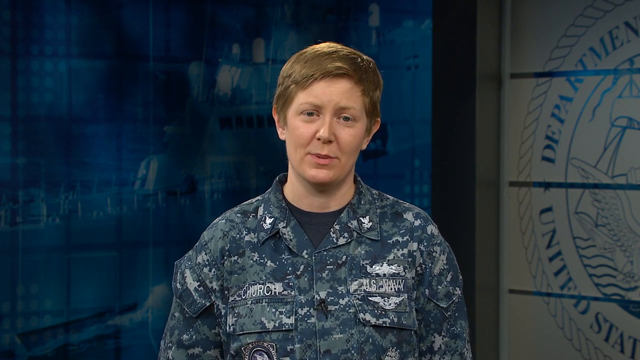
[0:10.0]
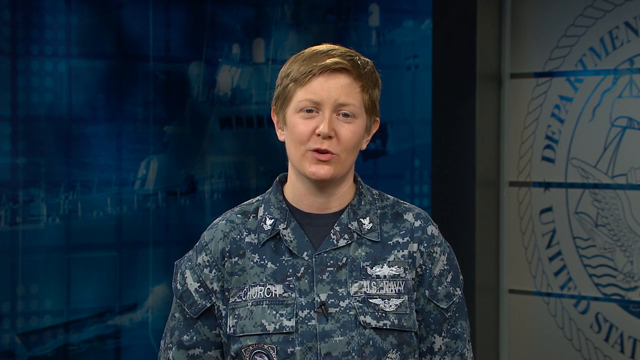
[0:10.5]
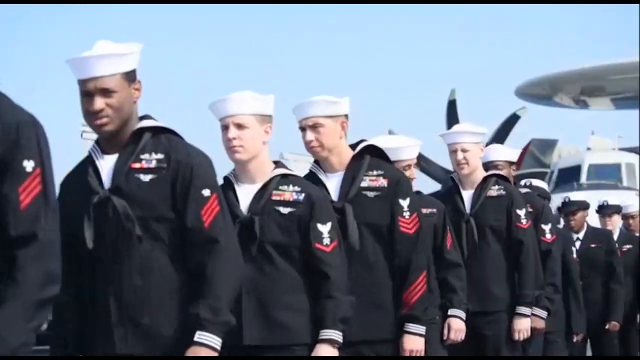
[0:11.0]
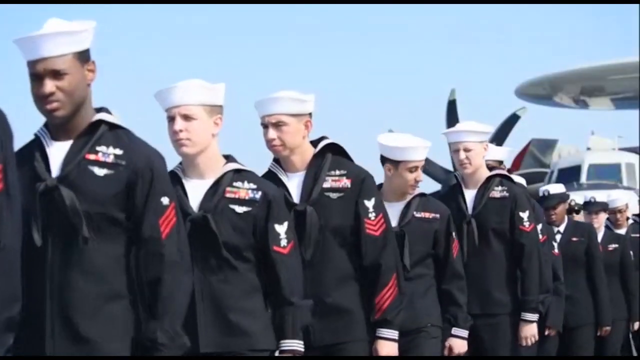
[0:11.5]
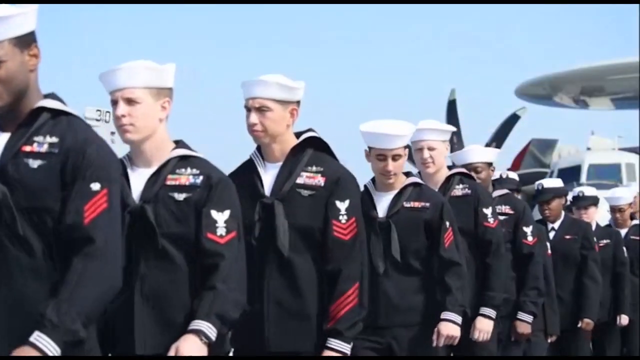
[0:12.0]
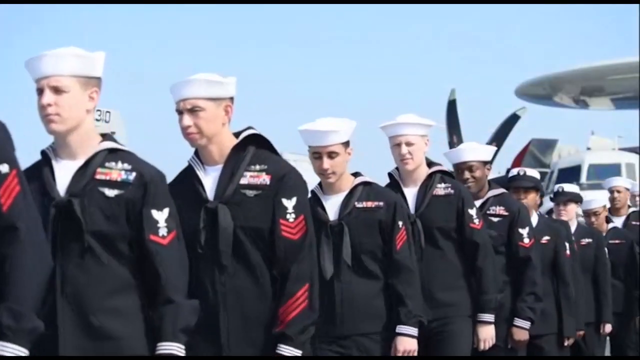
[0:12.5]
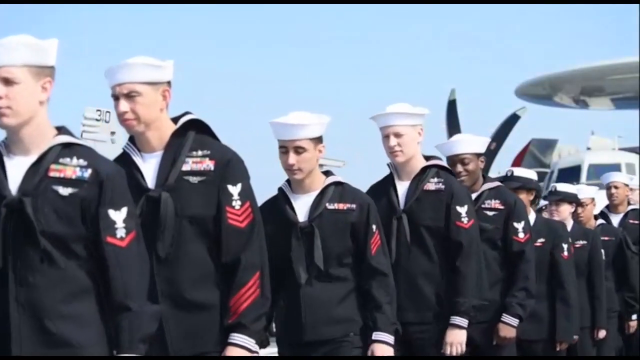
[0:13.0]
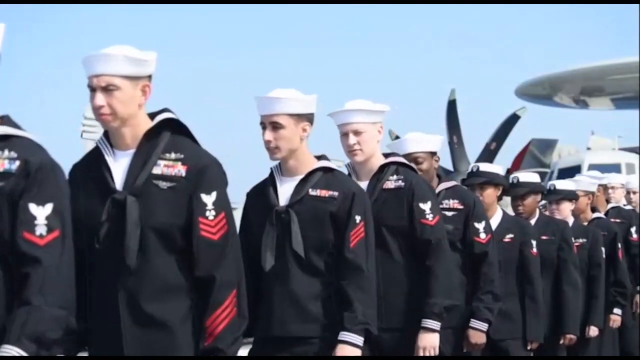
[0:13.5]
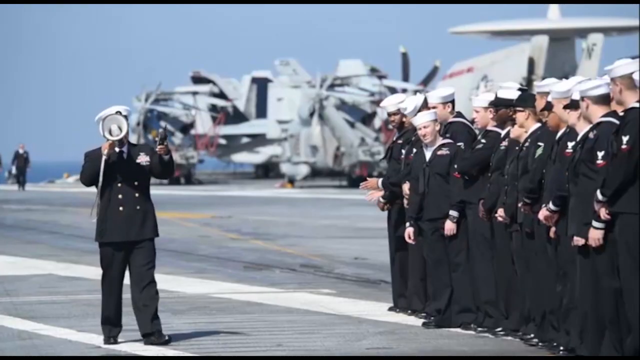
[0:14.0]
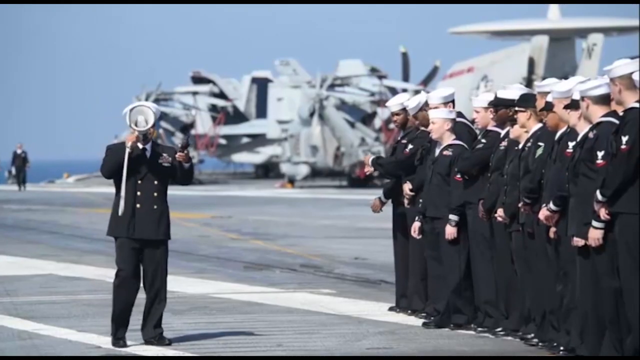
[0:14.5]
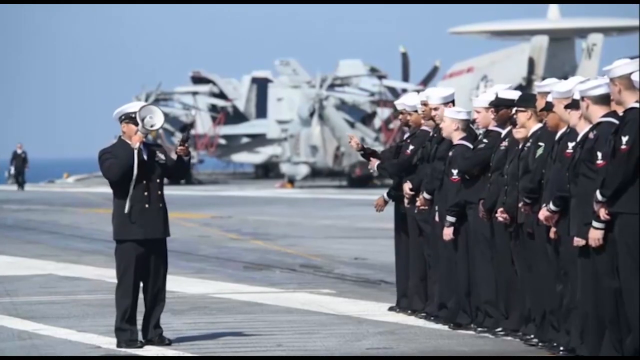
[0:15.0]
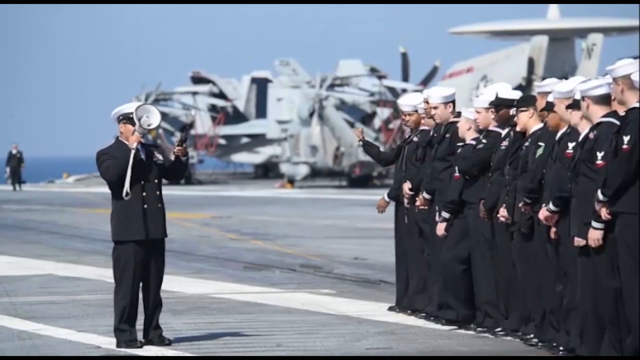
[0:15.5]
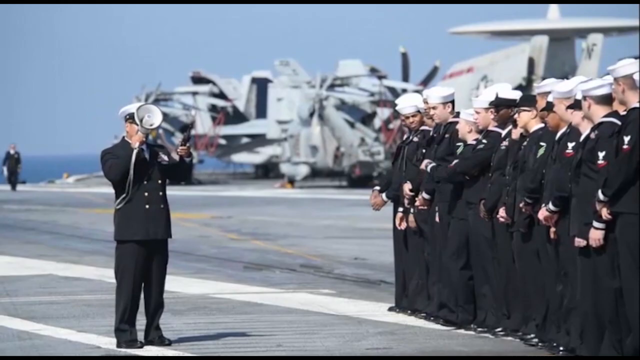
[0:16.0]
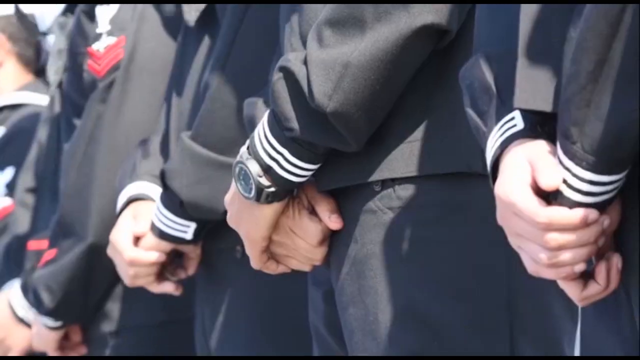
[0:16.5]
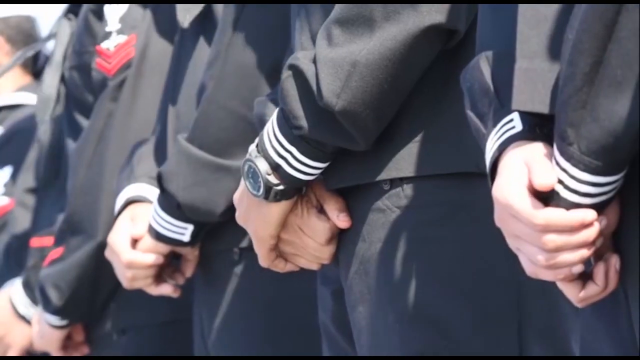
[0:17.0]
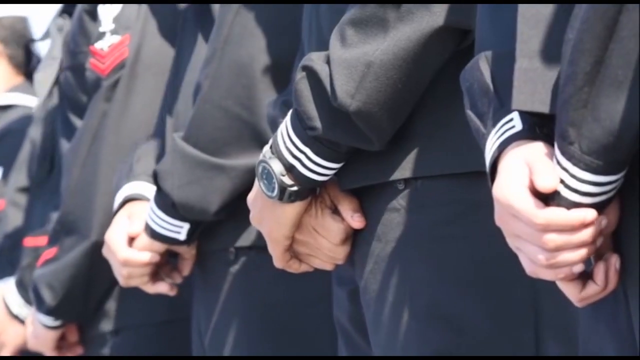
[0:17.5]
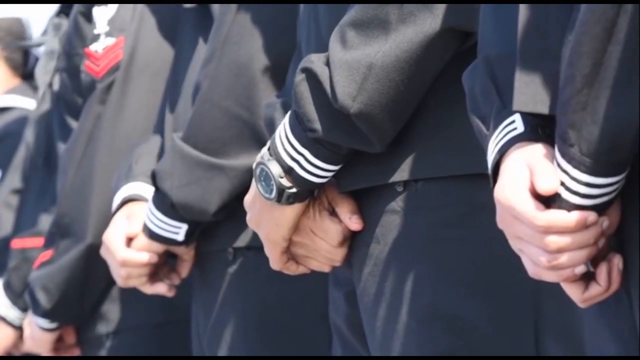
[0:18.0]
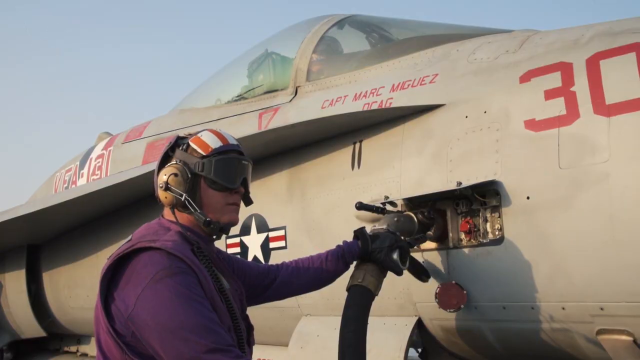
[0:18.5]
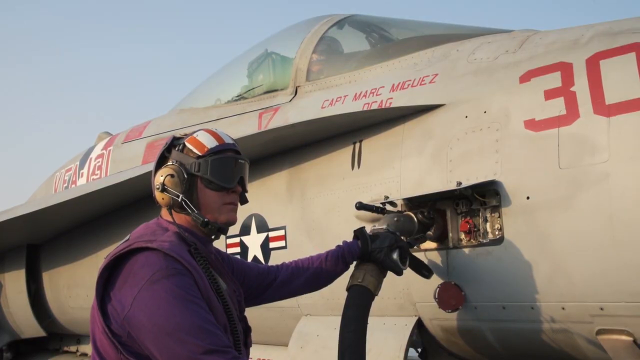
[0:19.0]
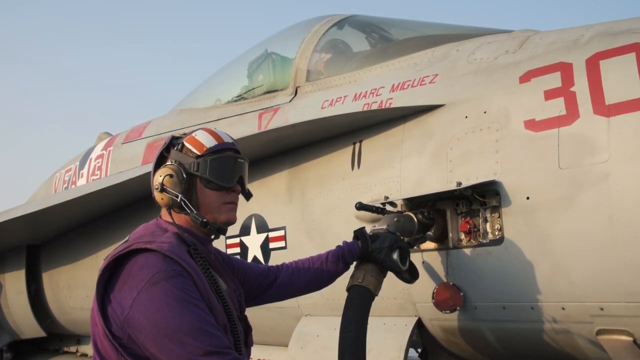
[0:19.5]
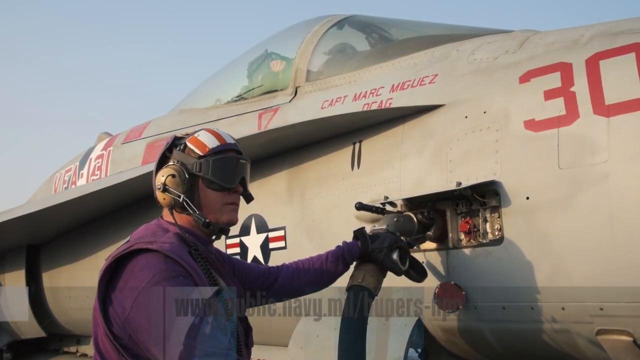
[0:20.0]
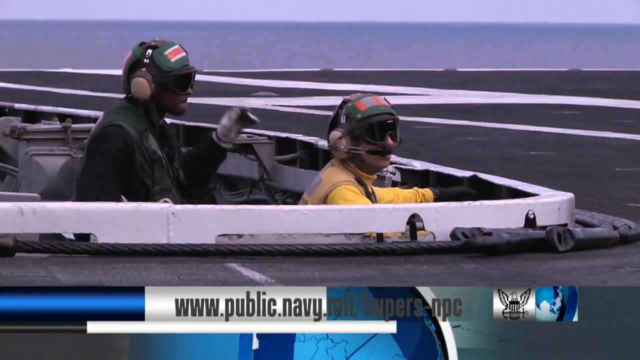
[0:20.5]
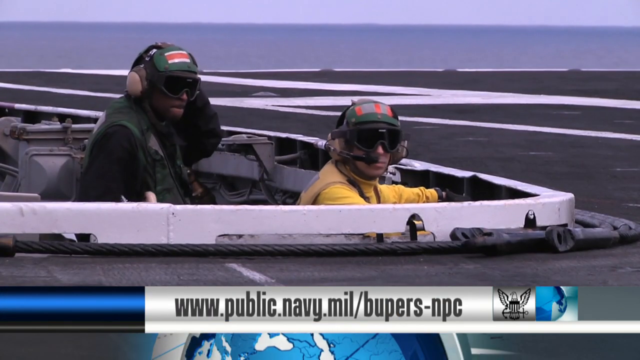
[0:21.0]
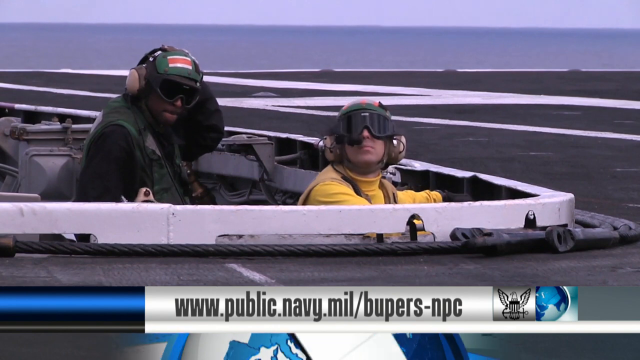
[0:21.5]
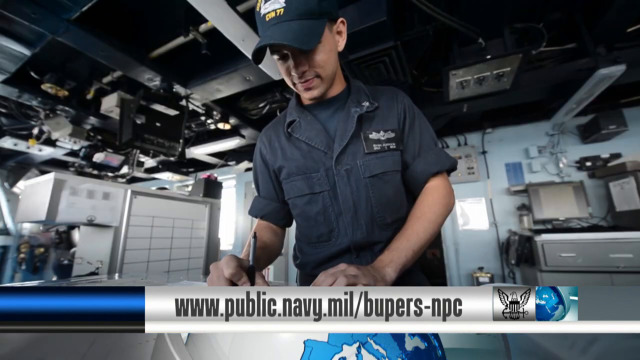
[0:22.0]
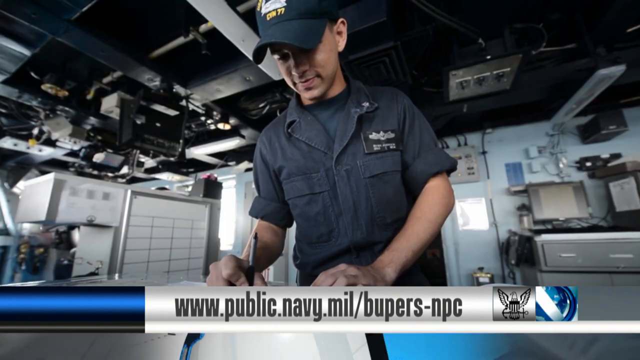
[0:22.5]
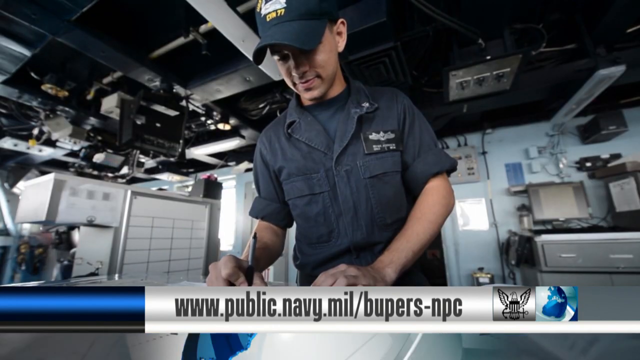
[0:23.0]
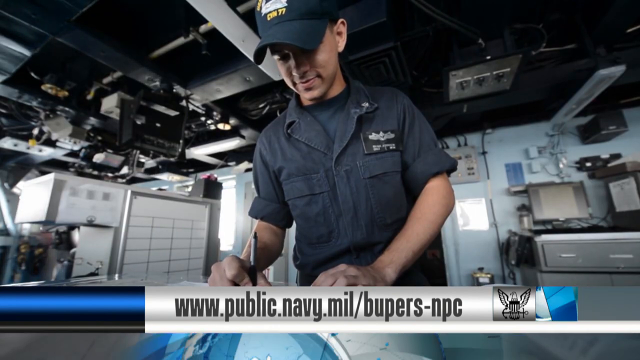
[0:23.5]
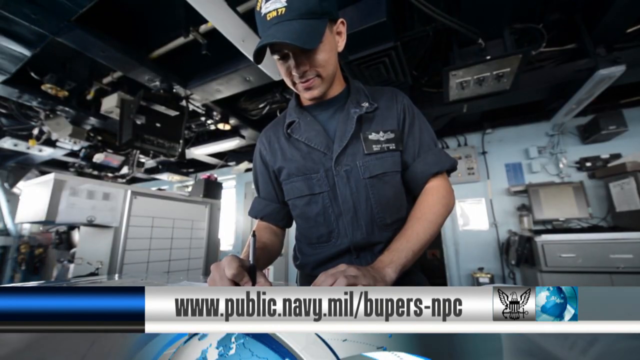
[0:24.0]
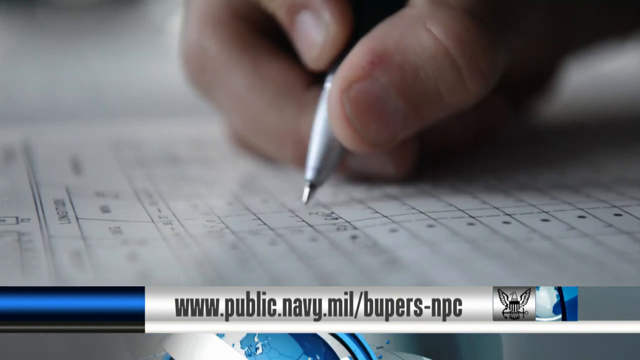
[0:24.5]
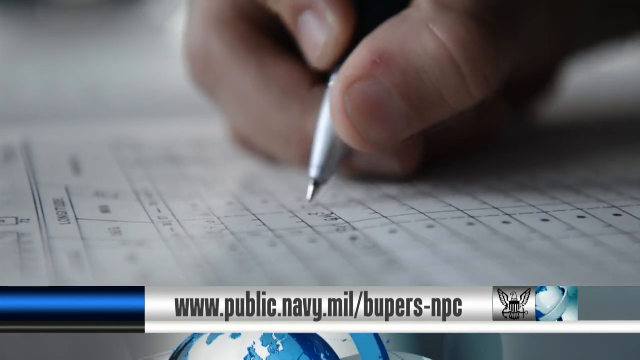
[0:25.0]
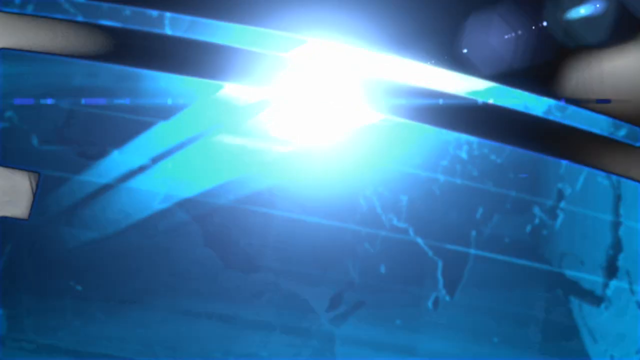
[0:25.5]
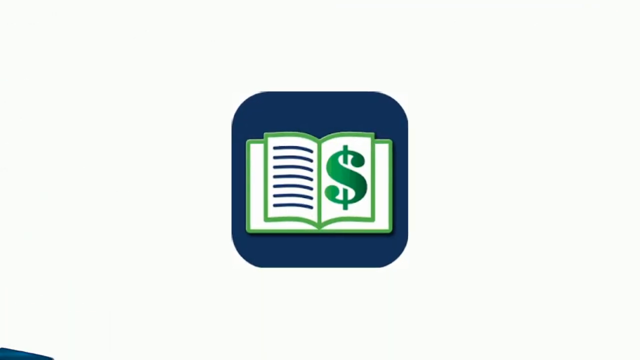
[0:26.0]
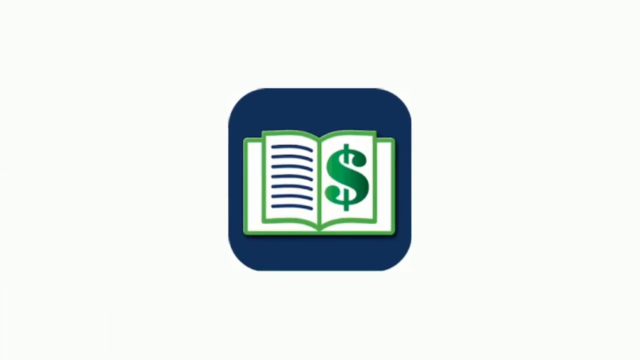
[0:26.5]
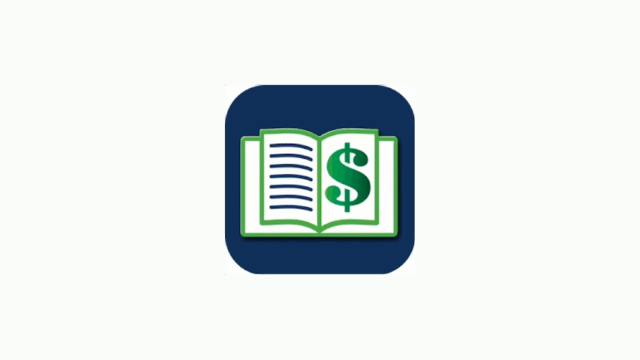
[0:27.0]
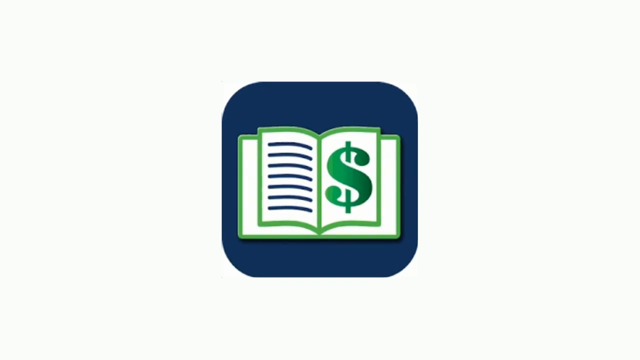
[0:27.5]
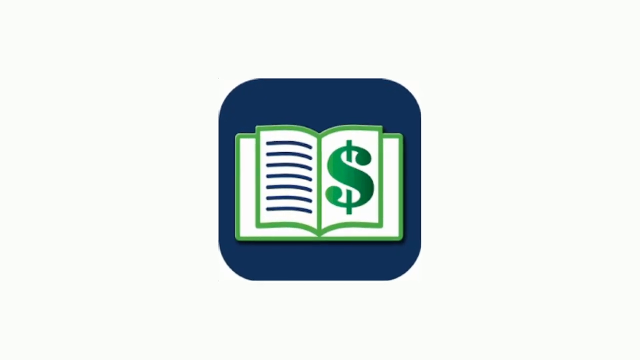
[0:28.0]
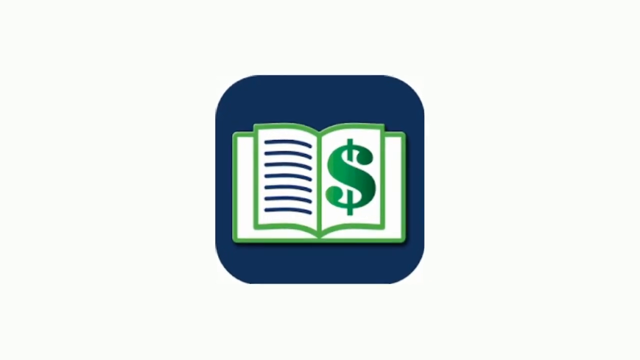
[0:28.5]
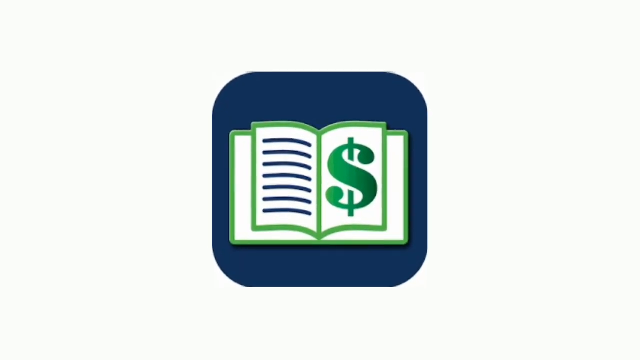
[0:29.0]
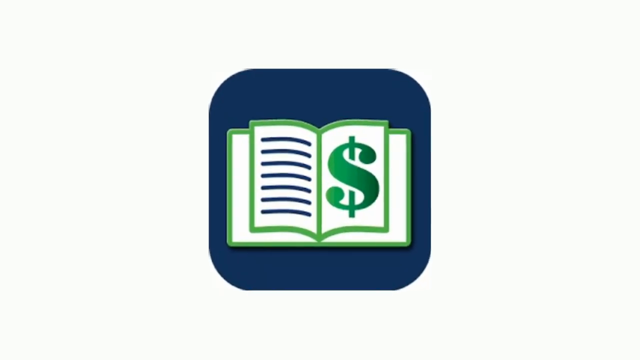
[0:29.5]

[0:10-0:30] The female soldier talks to the camera, wearing a blue t-shirt under a blue camouflage shirt that is buttoned up except for the top button. To her right is a sign that says "department" and "United". Next, a group of sailors walks in a line, each wearing a white hat, a white t-shirt, a black over shirt and a handkerchief tied around the neck; each appears to have different stripes or bars on the shoulders, and they wear their awards on their chests. A man walks and talks to them through a megaphone, and they appear to be on a carrier with planes and helicopters on the deck. Several soldiers then stand with their hands clasped in front of them; one has a watch on his left wrist. A fighter jet is gassed up by a man wearing a helmet, goggles over his eyes, earphones on his ears and a microphone in front of his face. The airplane says "Captain Mark Miguez", and the back of the plane says "VFA 131". Several people in a pit watch the planes come and go; one is a white man in a yellow jacket and one is a Black man in a black jacket, and both wear helmets. A text overlay says "www.publicnavy.mil/bloopers-NPC". A man in green clothes with his sleeves rolled up and a baseball cap on his head signs something at a table, writing in a document. Then a logo appears that looks like a book with a dollar sign on it.